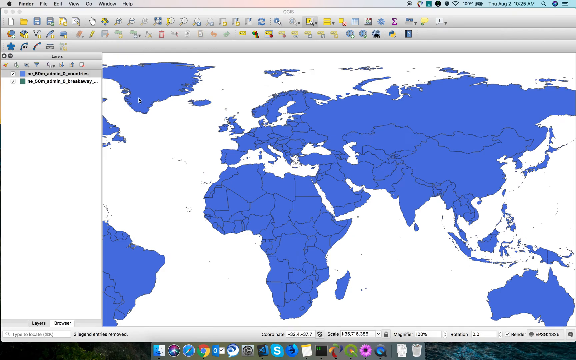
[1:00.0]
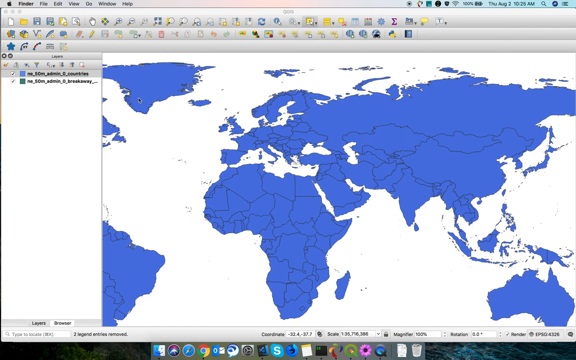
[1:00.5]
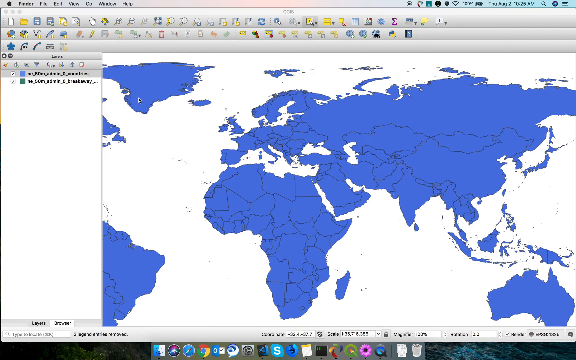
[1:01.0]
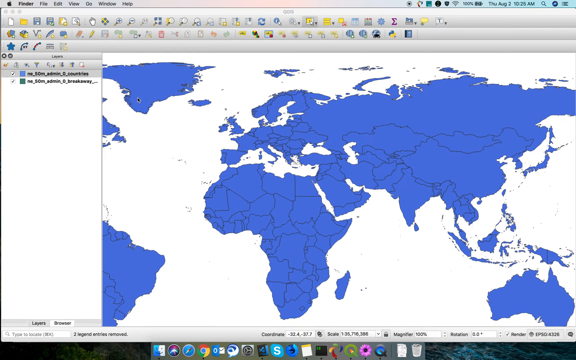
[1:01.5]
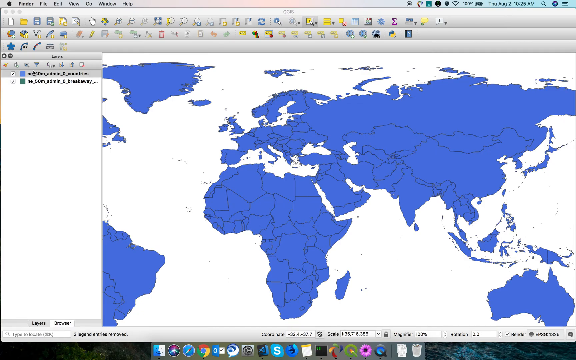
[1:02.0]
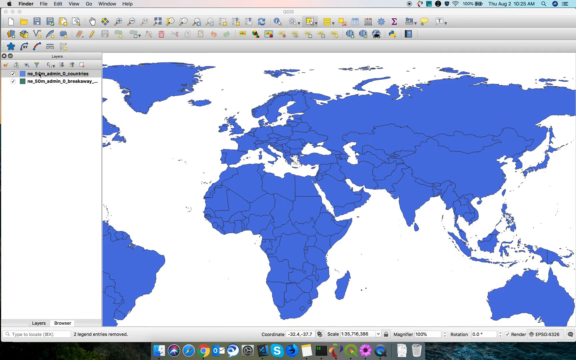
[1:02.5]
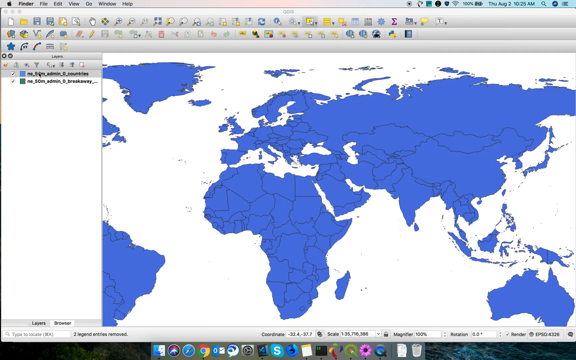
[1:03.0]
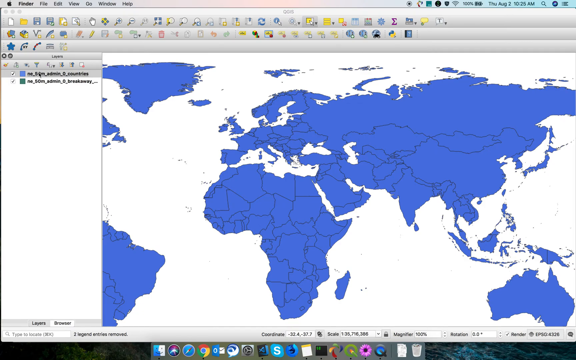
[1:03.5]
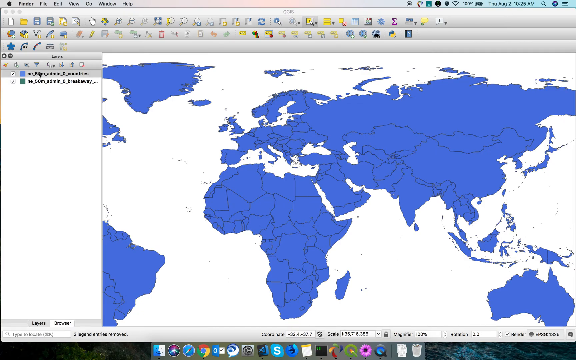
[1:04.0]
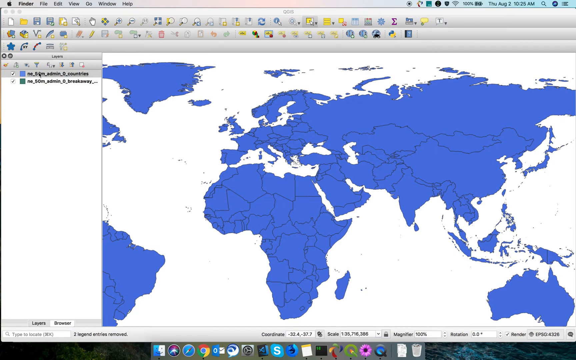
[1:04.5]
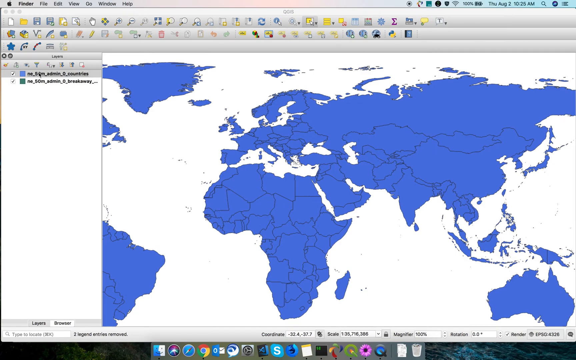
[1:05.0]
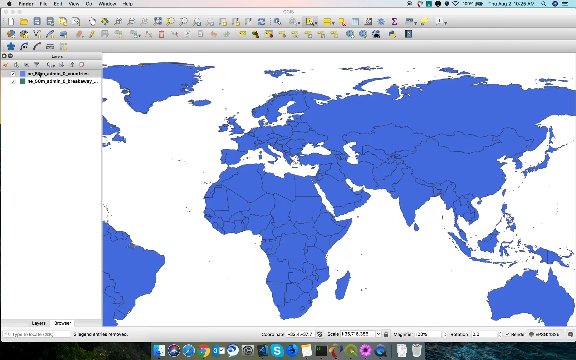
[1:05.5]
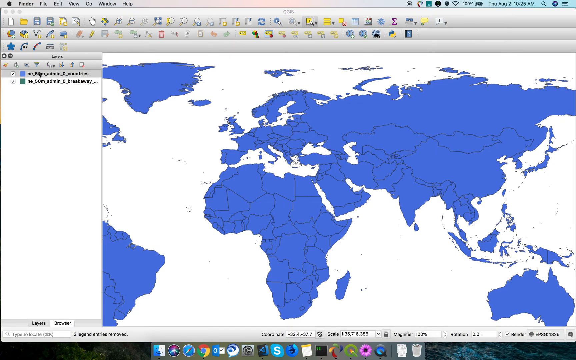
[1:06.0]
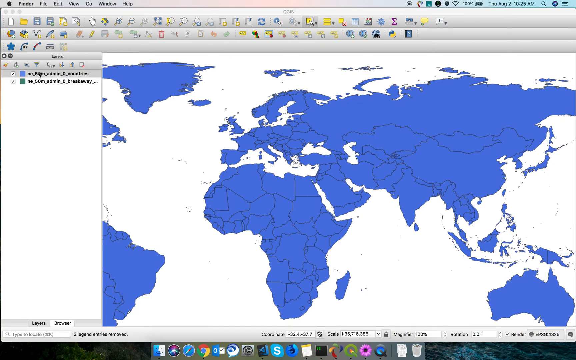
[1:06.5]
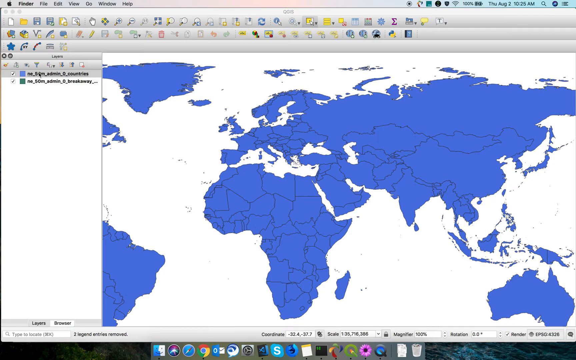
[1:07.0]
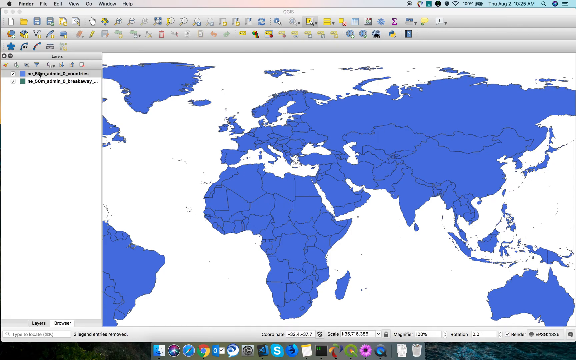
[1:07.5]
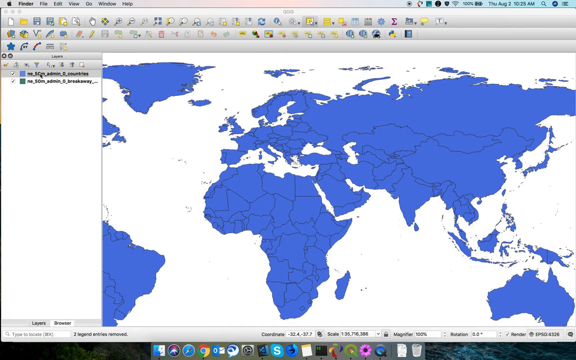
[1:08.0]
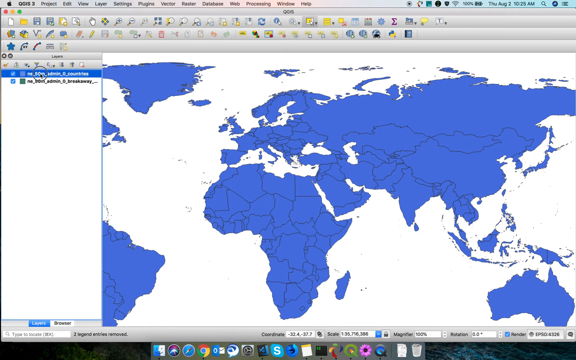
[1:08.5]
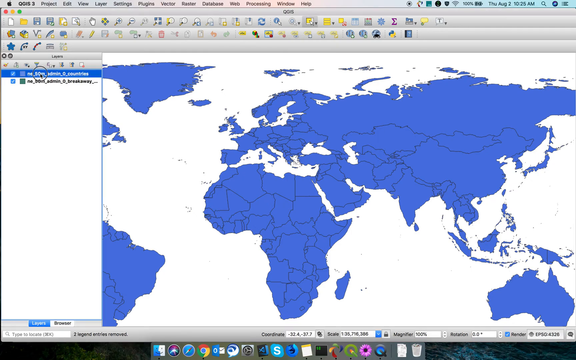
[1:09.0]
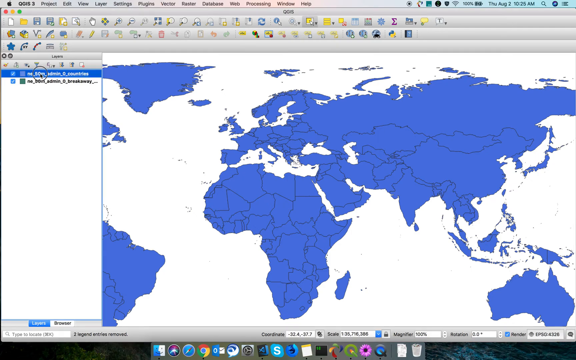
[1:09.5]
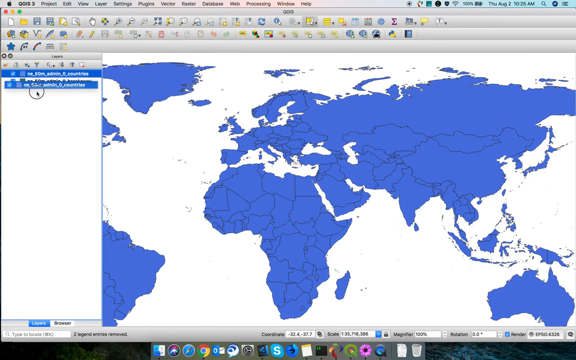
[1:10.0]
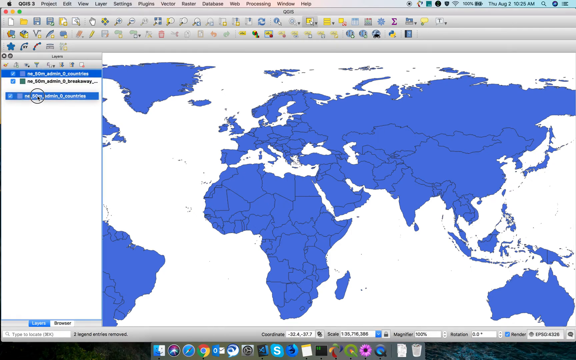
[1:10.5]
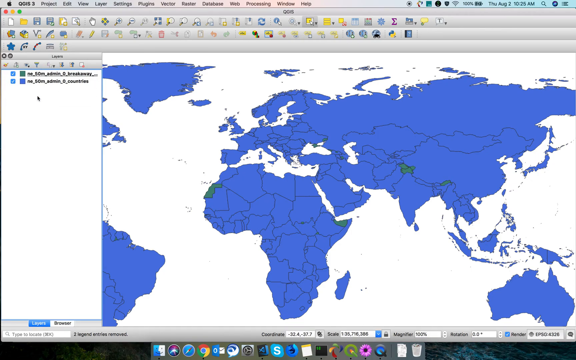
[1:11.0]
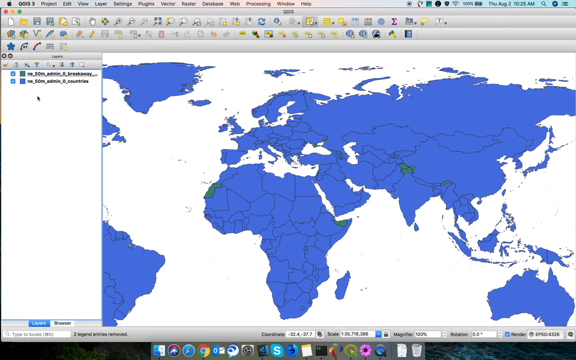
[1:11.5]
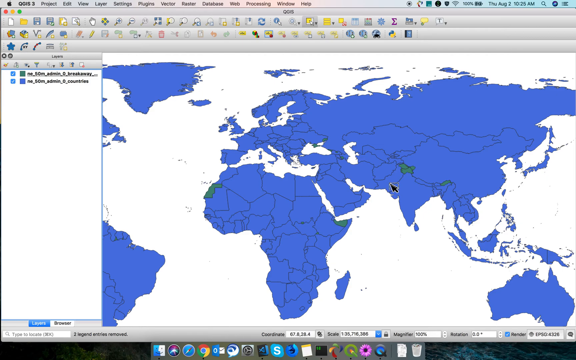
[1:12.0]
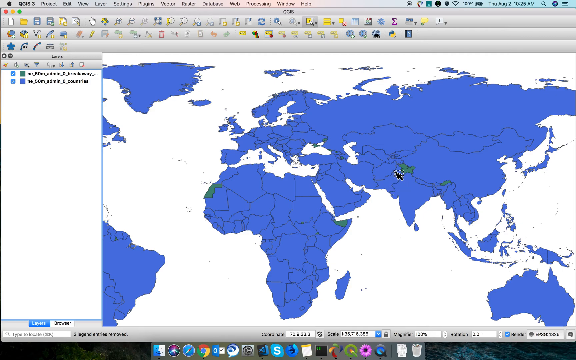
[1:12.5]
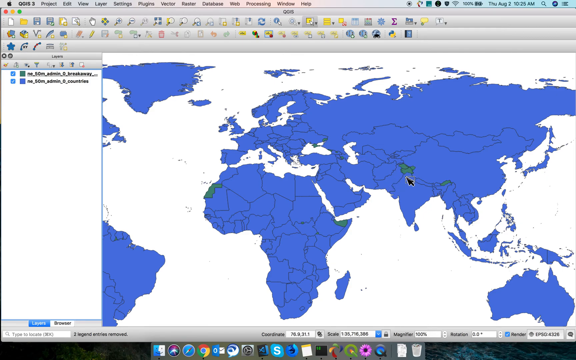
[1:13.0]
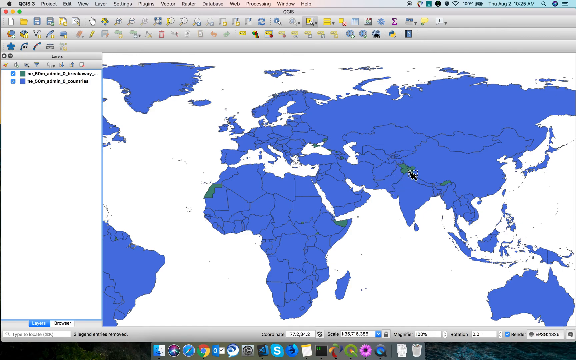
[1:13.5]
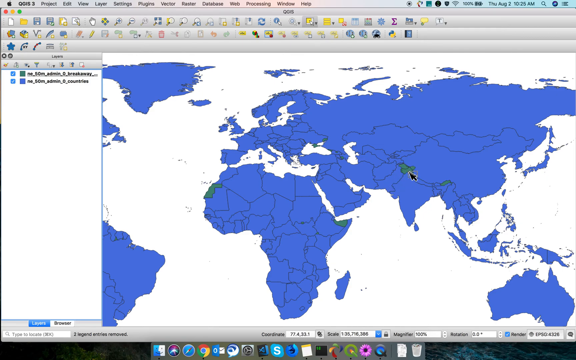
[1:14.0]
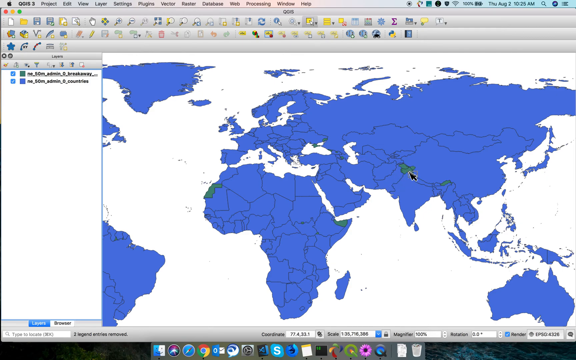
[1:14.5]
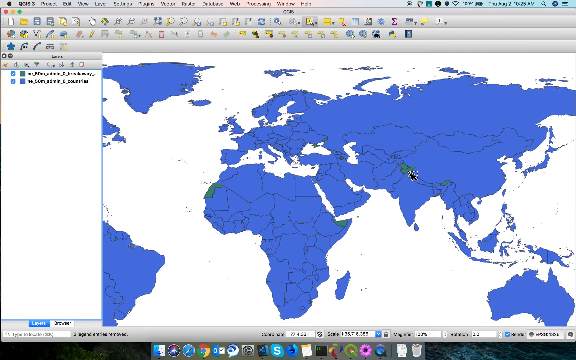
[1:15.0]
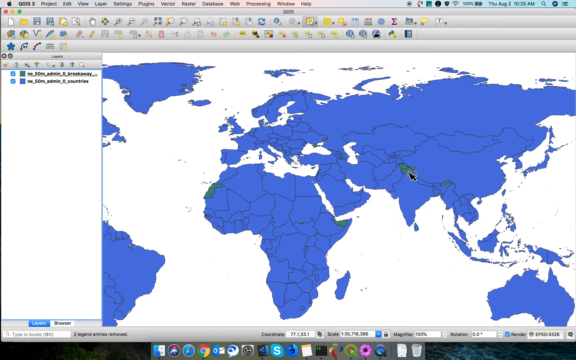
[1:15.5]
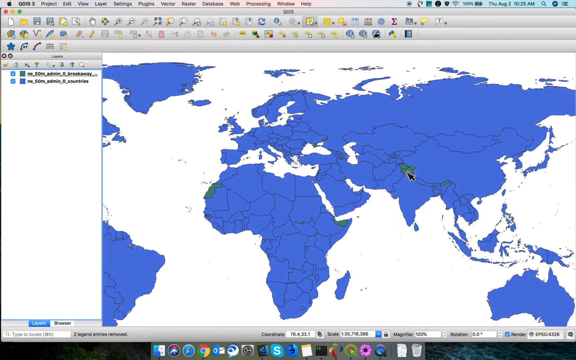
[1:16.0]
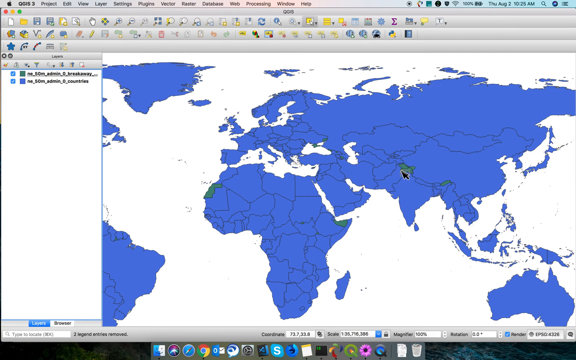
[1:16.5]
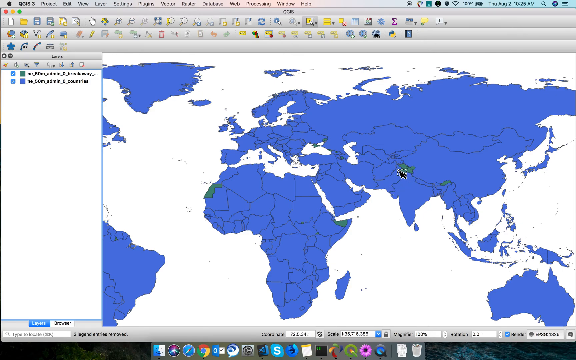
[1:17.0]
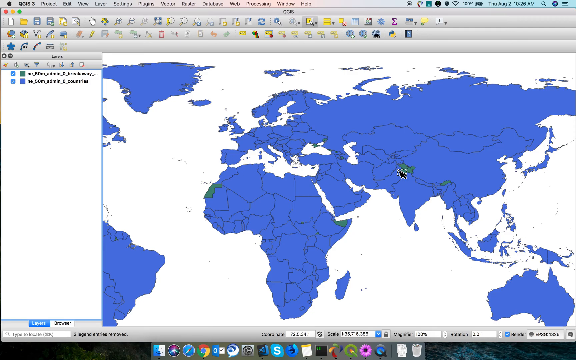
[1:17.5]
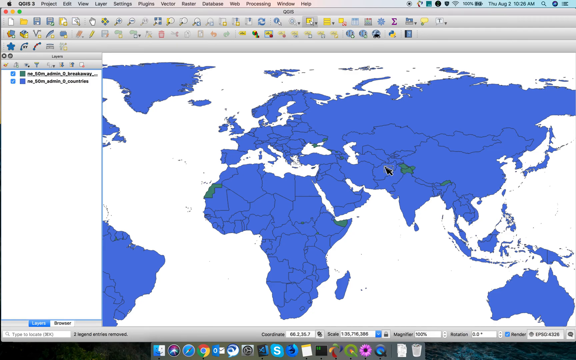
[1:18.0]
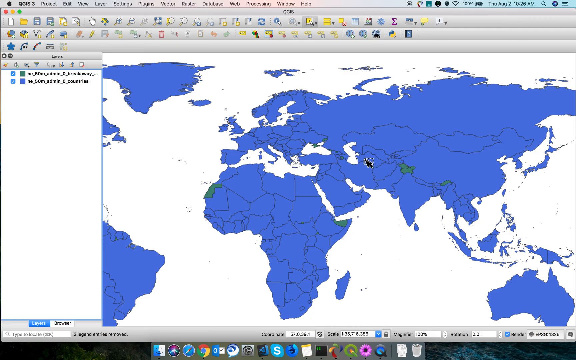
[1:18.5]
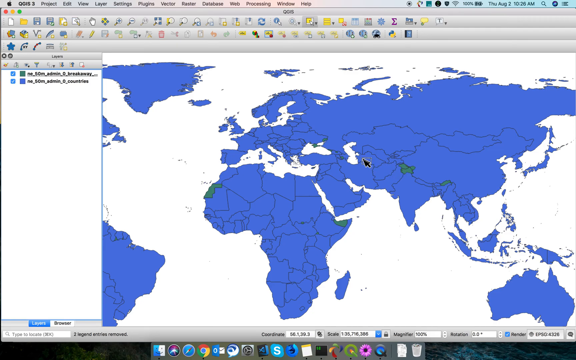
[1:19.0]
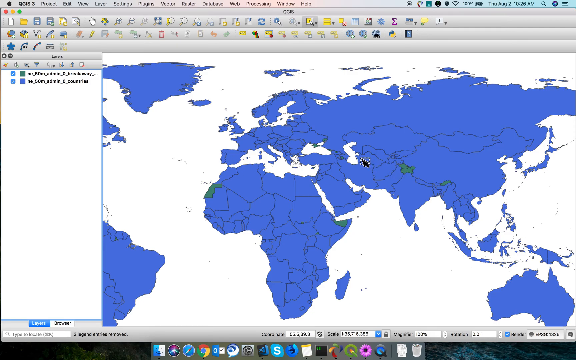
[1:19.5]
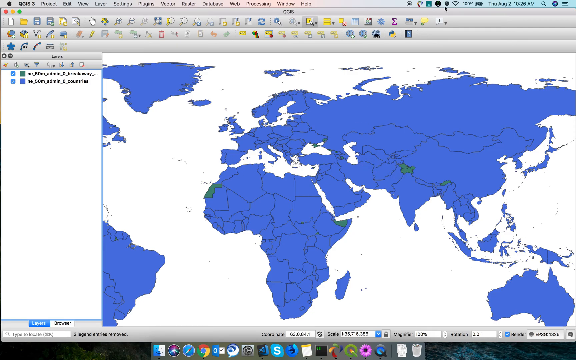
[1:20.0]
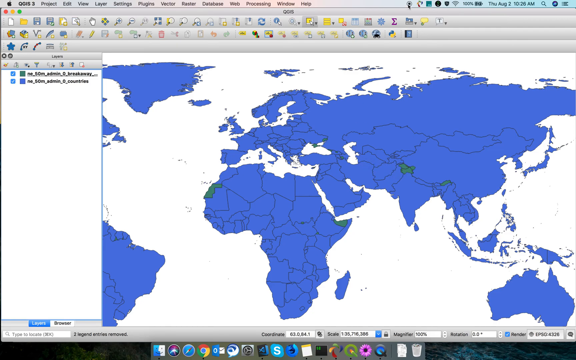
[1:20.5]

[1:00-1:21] More features of the app are shown, including the picture of the world highlighted in blue, with lines marking each country and the oceans in white. Where a music file is dragged into the map, it becomes green. Some features are shown being used, such as a yellow icon highlighted in the first row about 10 icons to the right, and a playback of the history of the file's origin. The icons are still shown in many different shapes and sizes, and the date and time are still displayed.